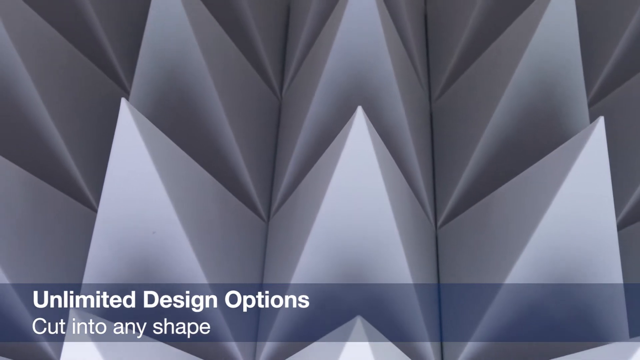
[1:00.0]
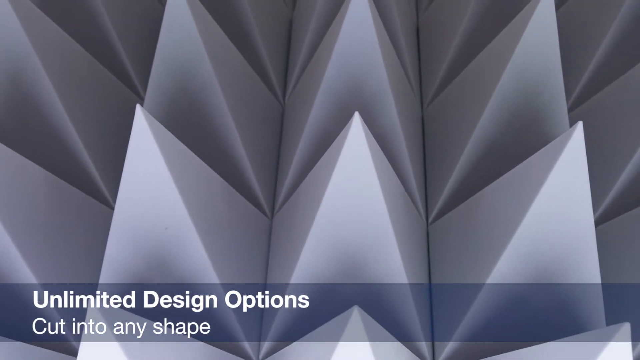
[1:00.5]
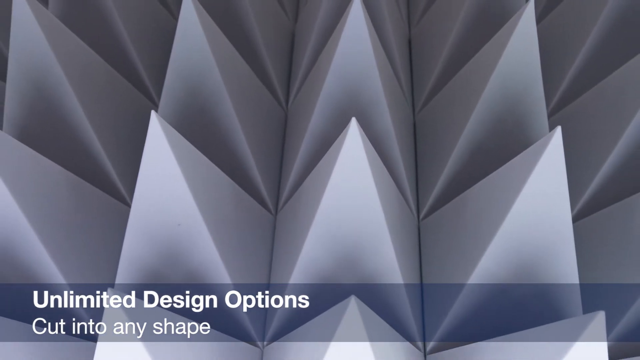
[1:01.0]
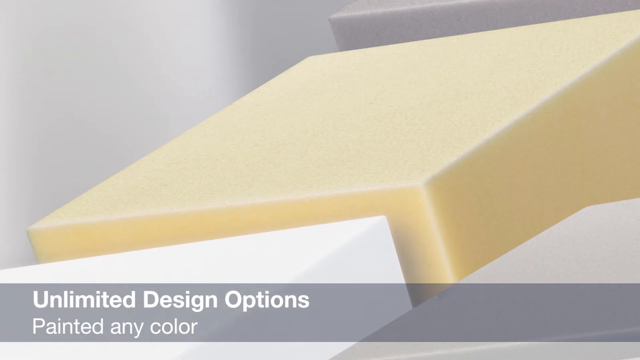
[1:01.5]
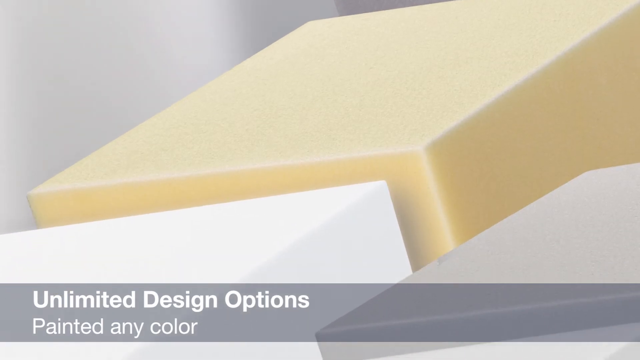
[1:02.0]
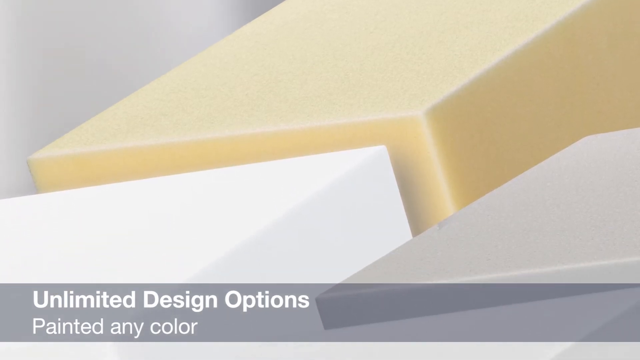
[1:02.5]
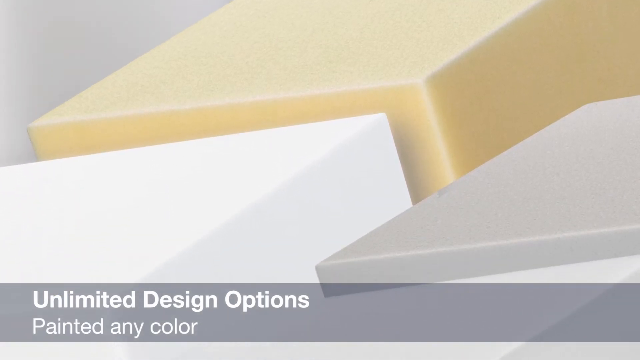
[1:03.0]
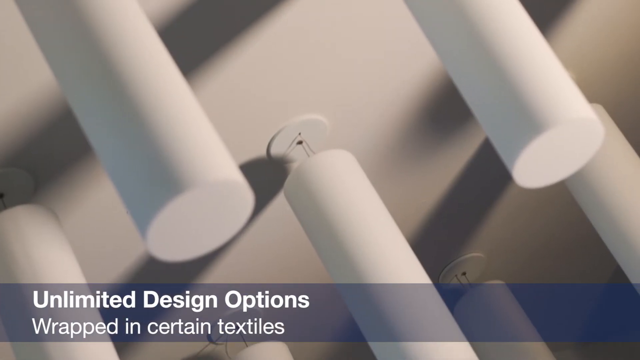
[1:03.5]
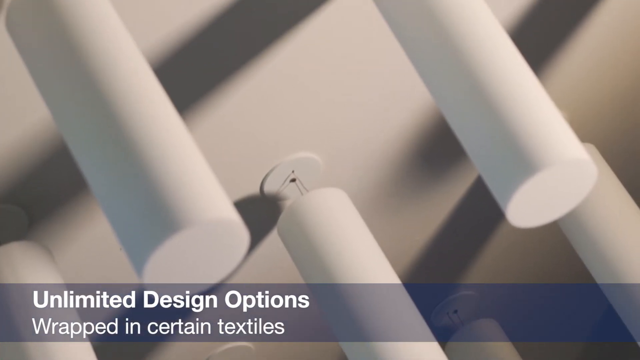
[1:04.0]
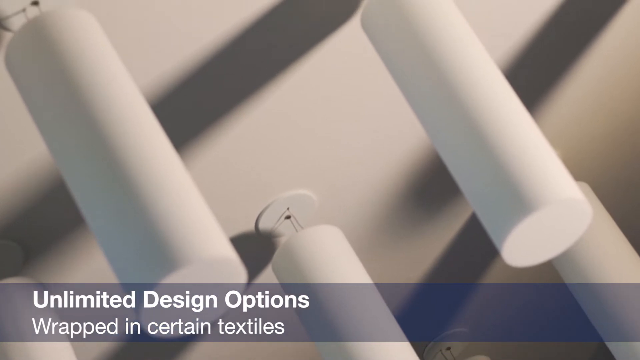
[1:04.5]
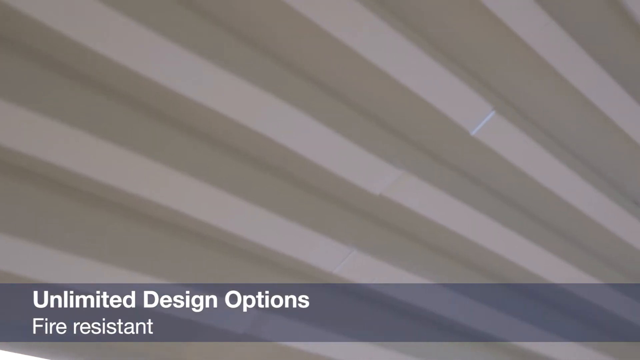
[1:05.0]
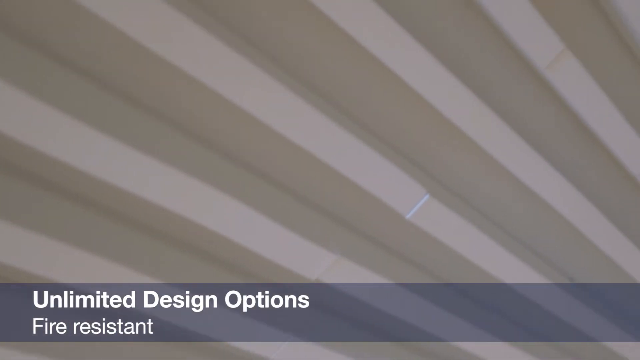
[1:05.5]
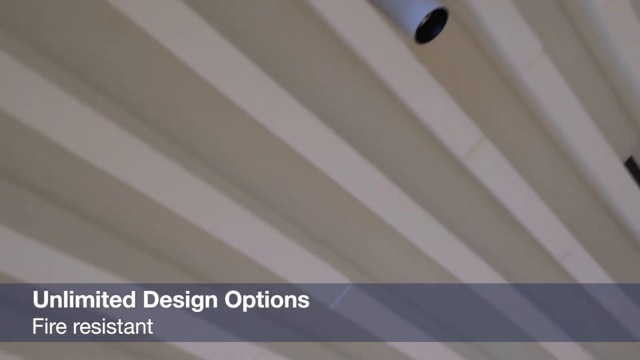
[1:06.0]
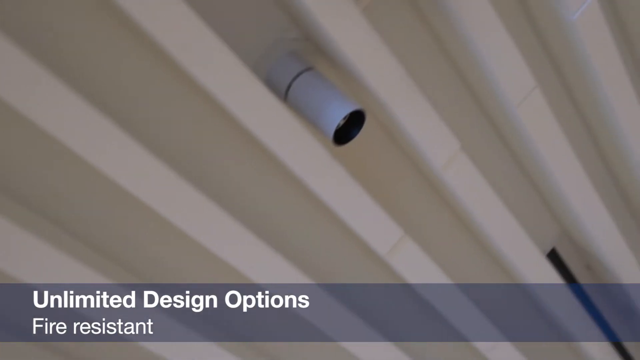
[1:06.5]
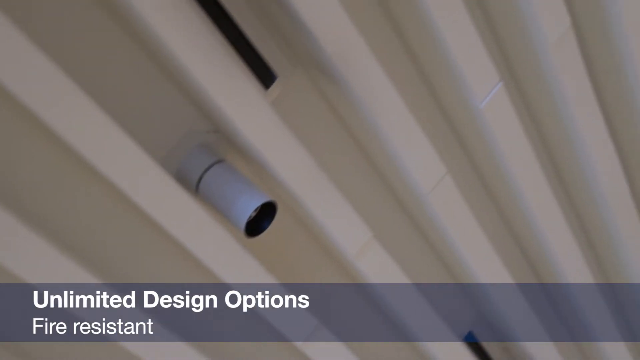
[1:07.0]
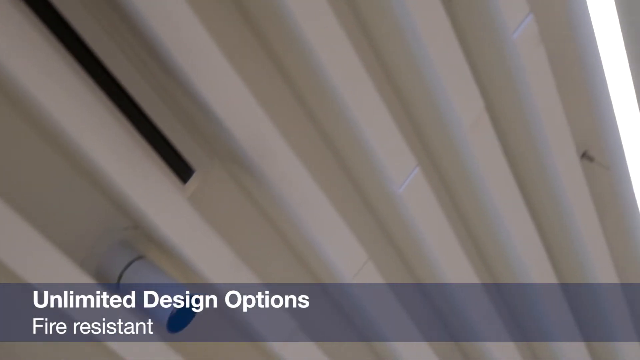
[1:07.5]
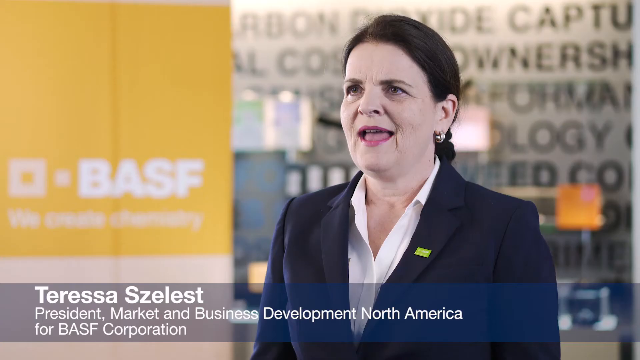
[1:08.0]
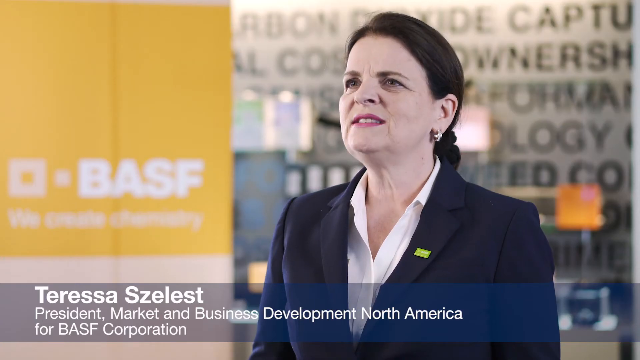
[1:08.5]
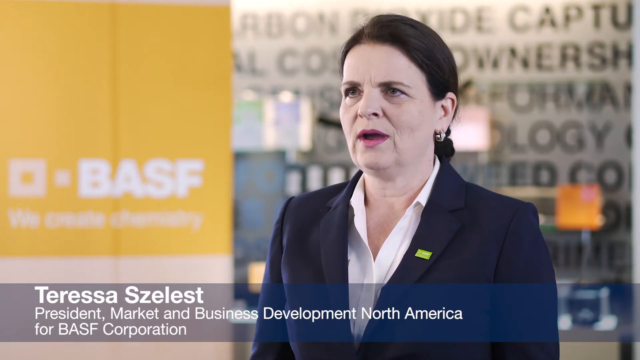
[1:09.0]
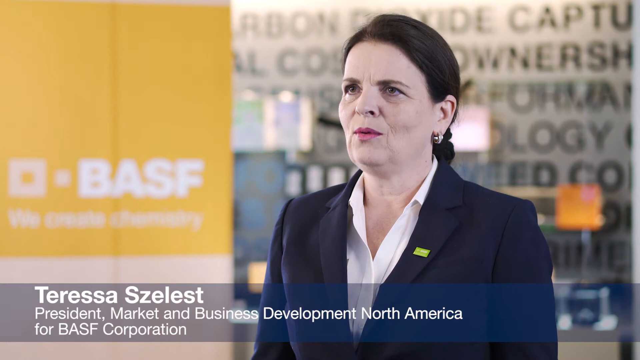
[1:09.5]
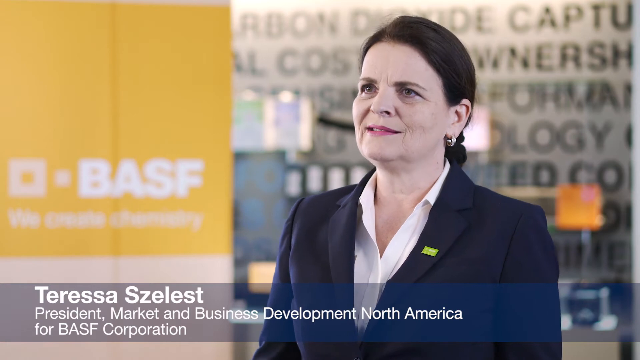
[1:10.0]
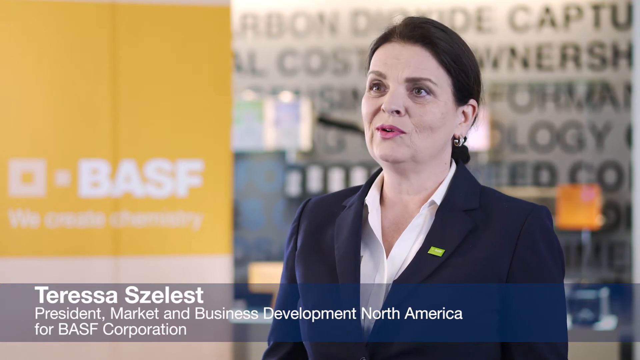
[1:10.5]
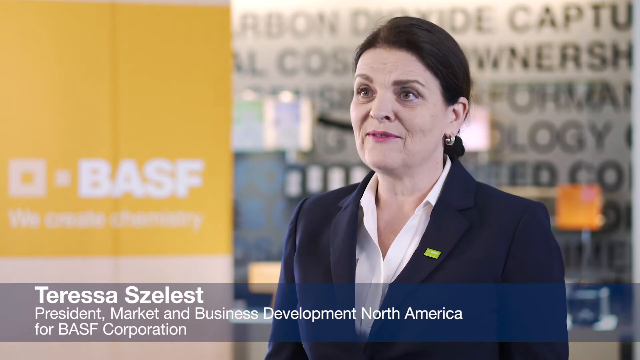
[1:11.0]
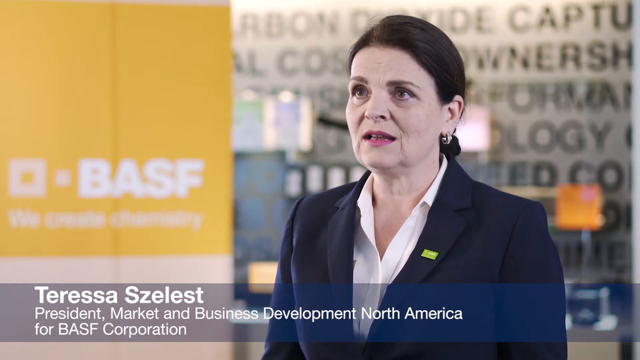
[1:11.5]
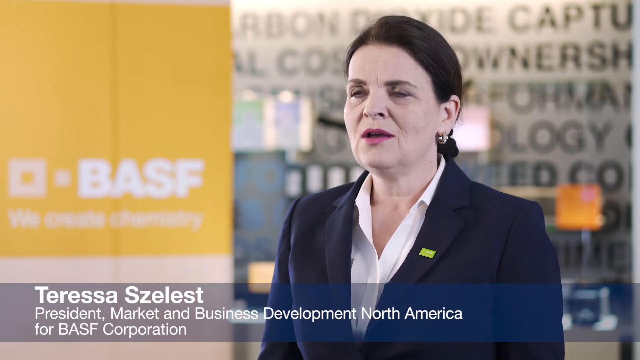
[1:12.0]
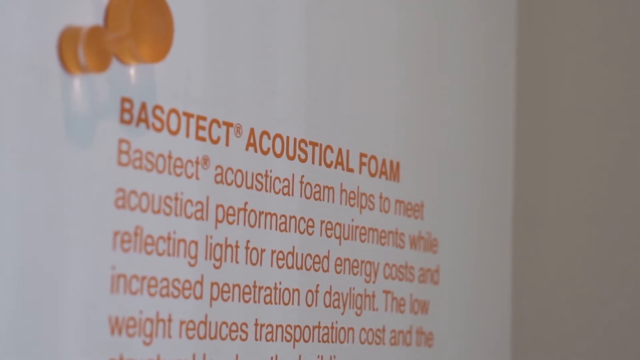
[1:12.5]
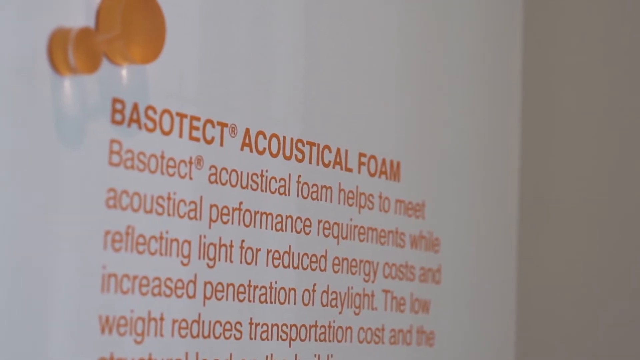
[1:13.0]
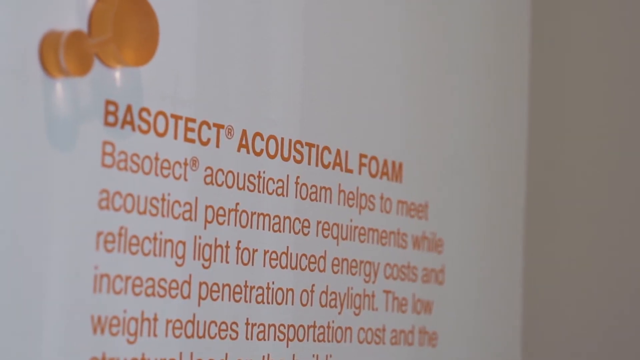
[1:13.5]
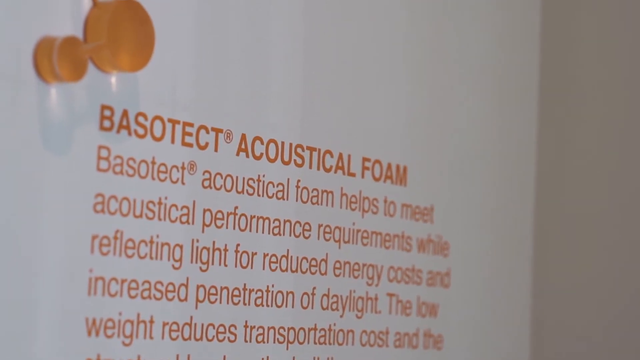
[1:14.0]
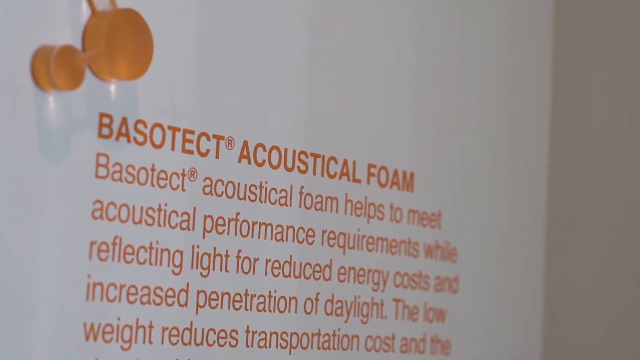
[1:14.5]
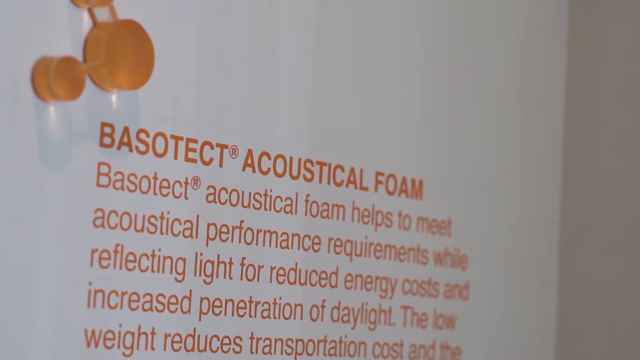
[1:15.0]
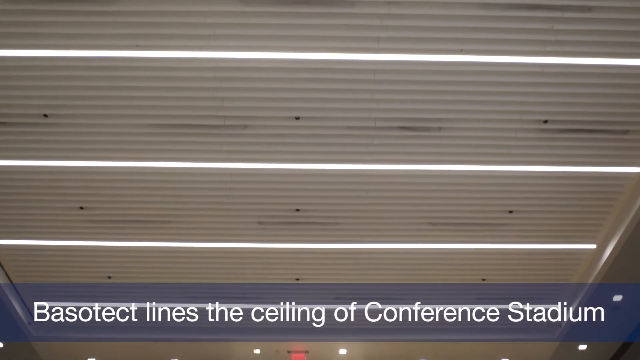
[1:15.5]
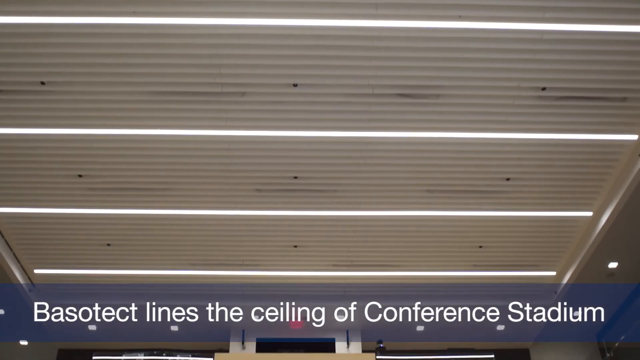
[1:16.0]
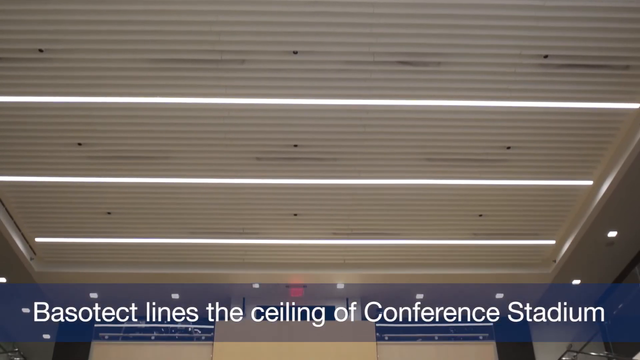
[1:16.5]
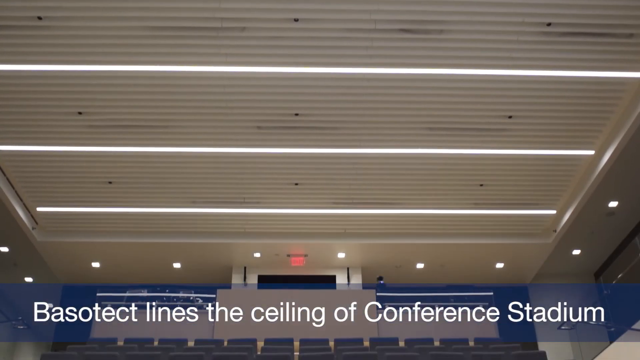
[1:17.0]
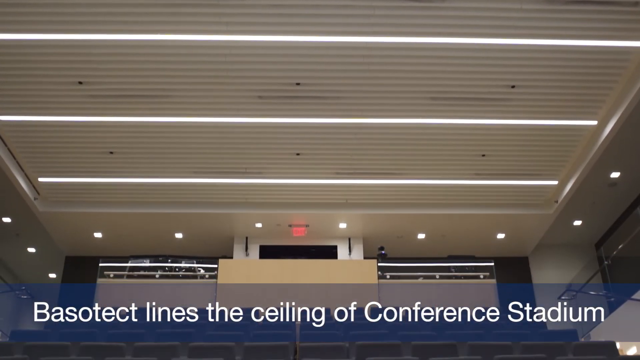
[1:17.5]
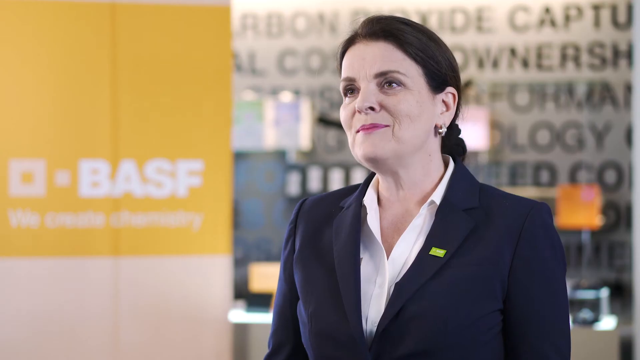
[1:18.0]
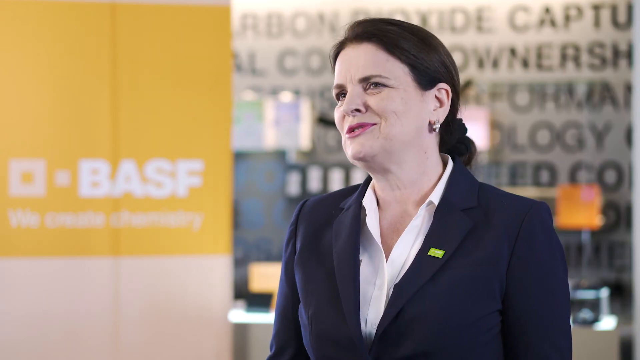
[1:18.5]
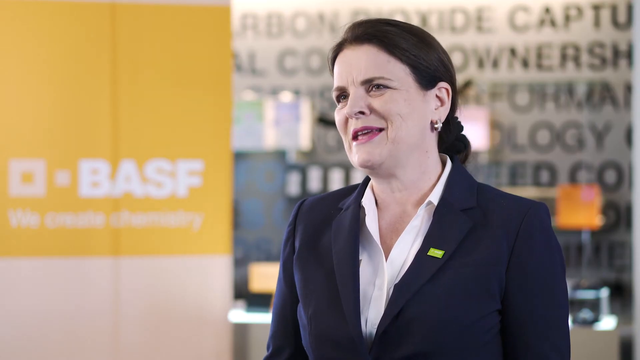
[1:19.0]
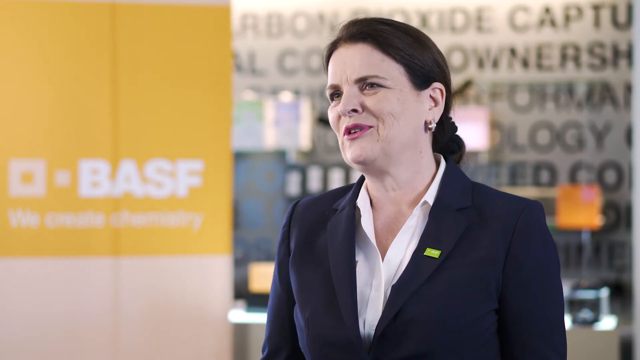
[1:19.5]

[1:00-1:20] Content from BASF, a company involved in chemistry, shows a train station with many people coming and going, and the station's ceiling built in a geometric shape. A man who looks to be in his 40s, Doyle Robertson, is talking; he is an expert on melamine foam in North America for BASF Corporation. The video moves to the BASF company building, where many people work in a very big office space and discuss something on their monitors; the office looks gender diverse. Various geometric patterns on ceilings are shown. A woman named Teresa, a market developer at BASF, is seen talking.